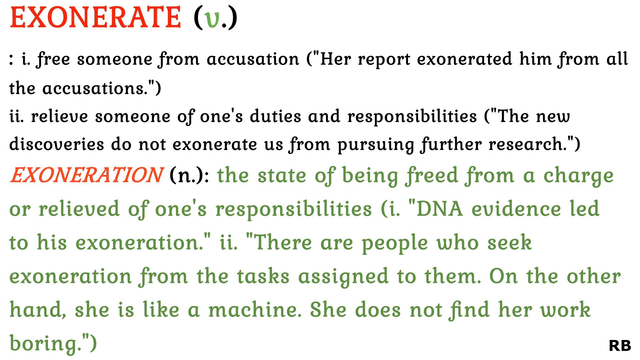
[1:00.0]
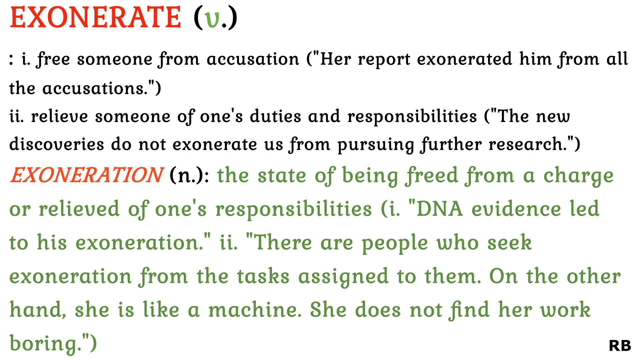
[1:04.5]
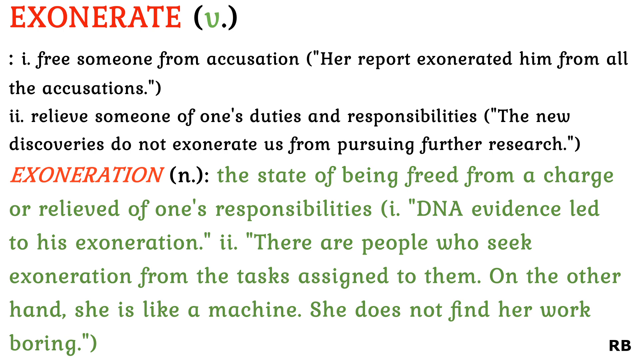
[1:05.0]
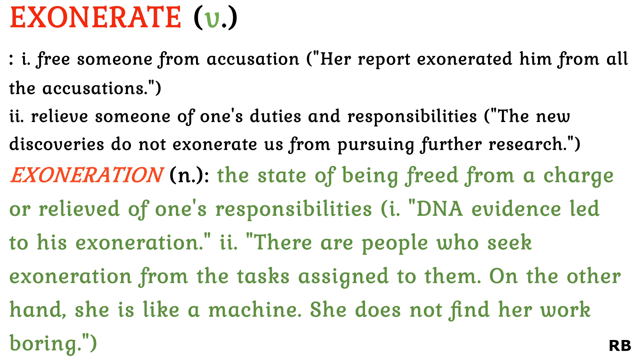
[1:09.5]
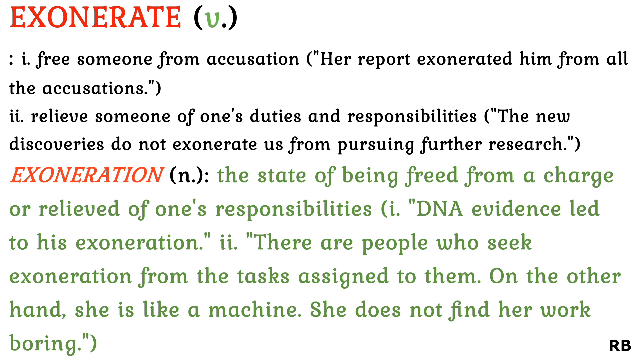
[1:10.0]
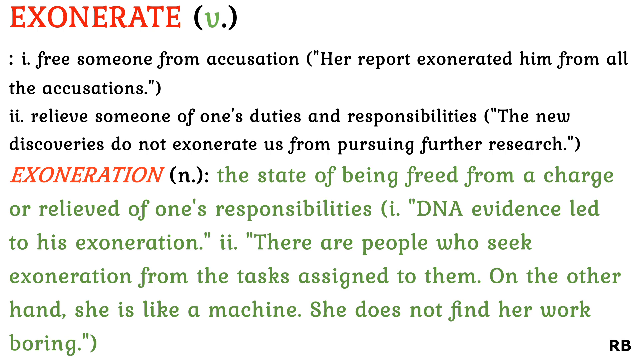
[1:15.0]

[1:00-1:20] At the top, "EXONERATE" appears in red capital letters, with black parentheses next to it containing a green V and a black dot. Underneath, marked with an I and a dot, it reads "free someone from accusation", followed in parentheses and quotes by "her report exonerated him from all accusations." Next, marked with two I's, comes "relieve someone of one's duties and responsibilities", with the quoted example in parentheses "the new discoveries do not exonerate us from pursuing further research." Then "EXONERATION" appears in red capital letters, with a black N next to it. In green font, the definition reads "the state of being freed from a charge or relieved of one's responsibilities", followed in parentheses by "DNA evidence led to his exoneration" and another meaning, "there are people who seek exoneration from tasks assigned to them. On the other hand, she is like a machine, she does not find her work boring."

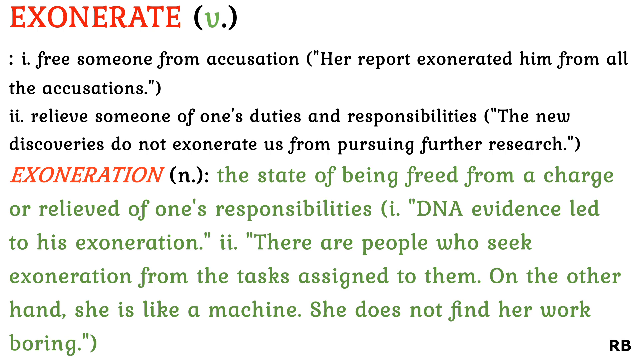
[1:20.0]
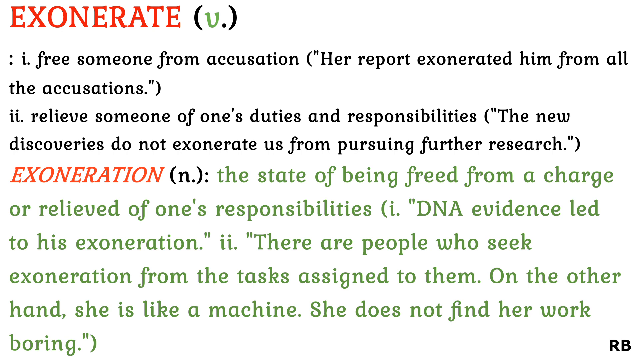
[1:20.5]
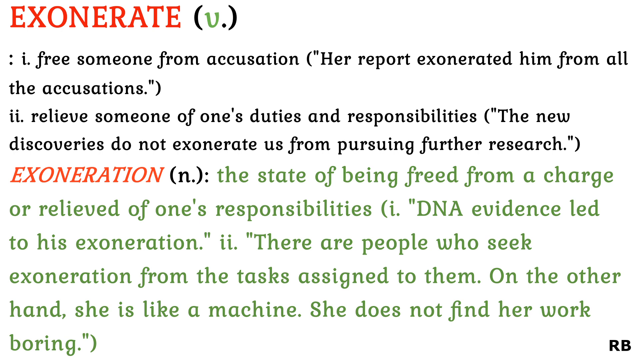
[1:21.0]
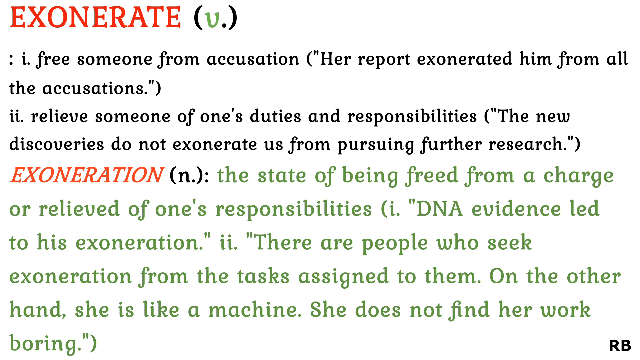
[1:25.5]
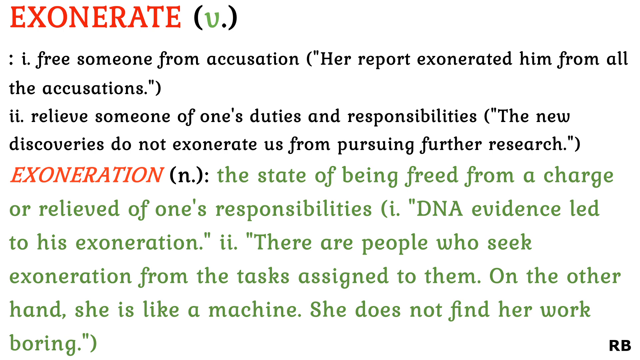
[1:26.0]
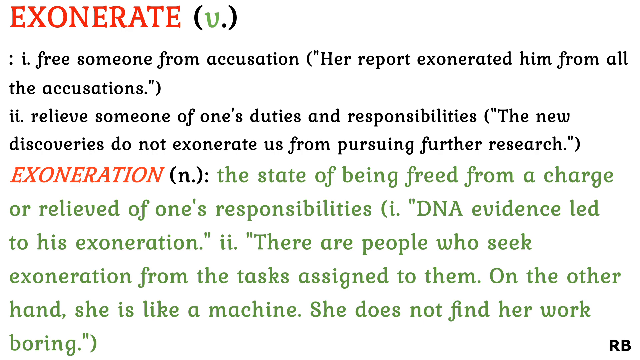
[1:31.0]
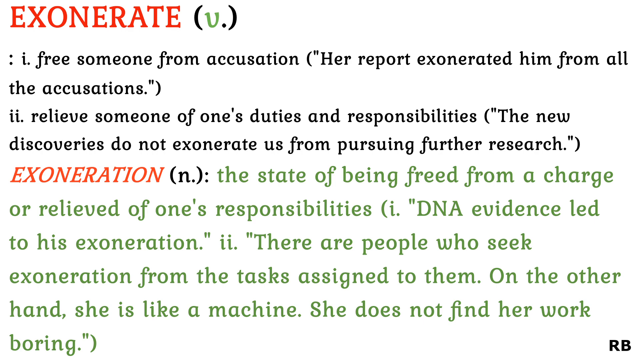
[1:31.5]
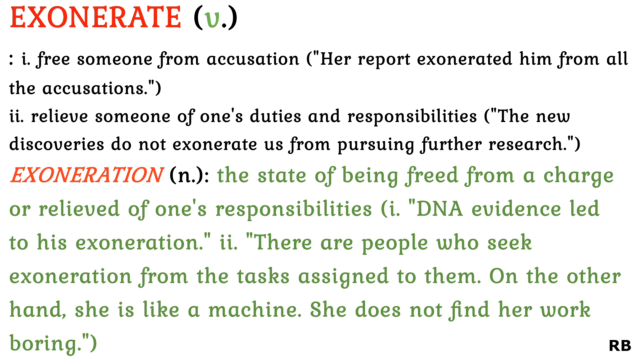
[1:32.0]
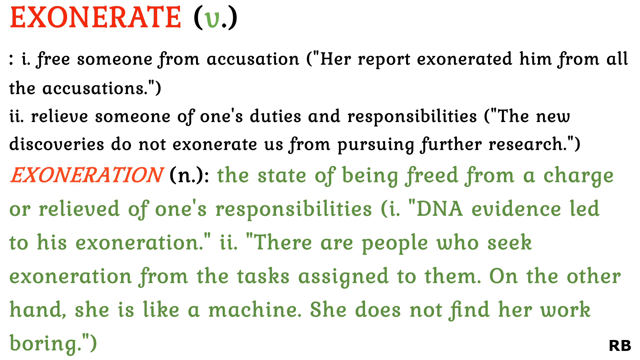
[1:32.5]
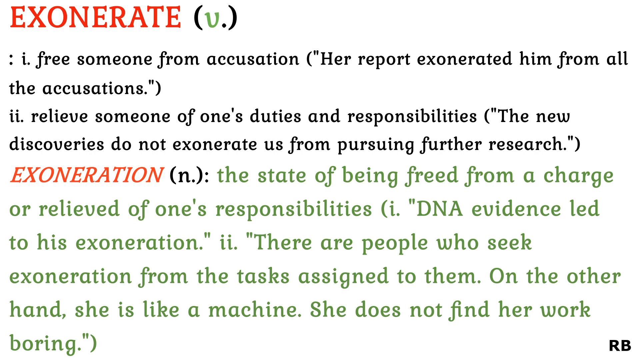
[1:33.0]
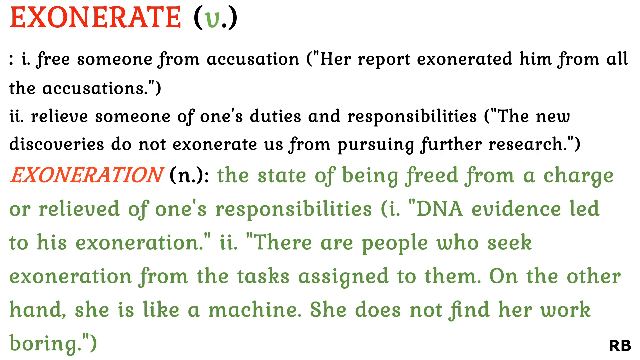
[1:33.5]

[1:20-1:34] In the upper left-hand corner, the word "EXONERATE" is in red capital letters, with black parentheses containing a green V and a black dot, which probably means verb. Underneath, in black and marked with an I and a dot, it says "free someone from accusation", followed in parentheses and quotes by "her report exonerated him from all accusations." Then, marked with two I's and a dot, comes "release someone of one's duties and responsibilities", with the quoted example in parentheses "the new discoveries do not exonerate us from pursuing further research." Below that, "exoneration" appears in red, with a black N in parentheses meaning noun. In green, the definition reads "the state of being freed from a charge or relieved of one's responsibilities", followed by the examples "DNA evidence led to his exoneration" and, marked with two I's and a dot, "there are people who seek exoneration from the tasks assigned to them. On the other hand, she is like a machine. She does not find her work boring."